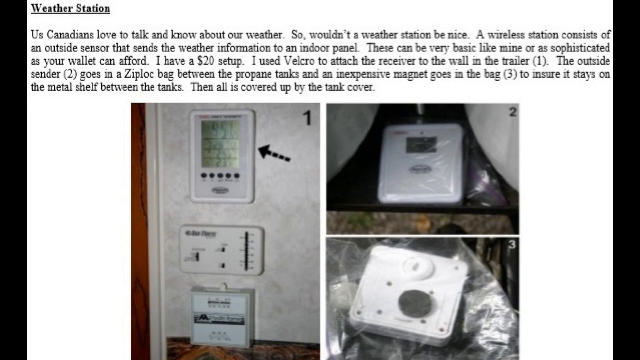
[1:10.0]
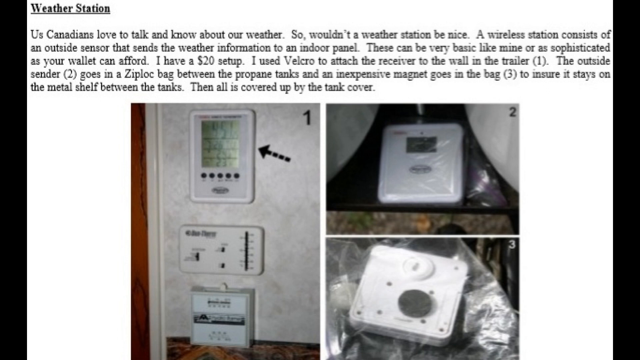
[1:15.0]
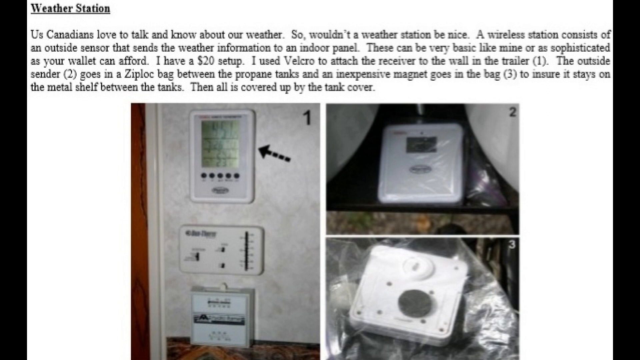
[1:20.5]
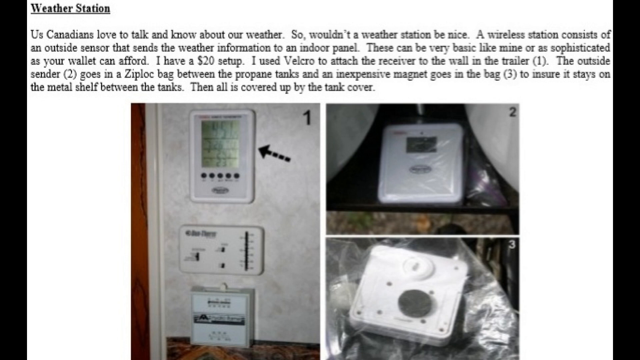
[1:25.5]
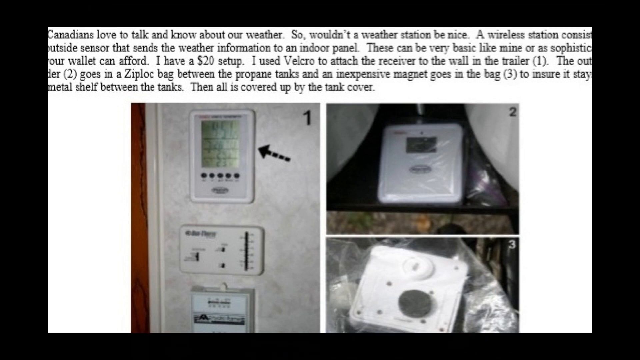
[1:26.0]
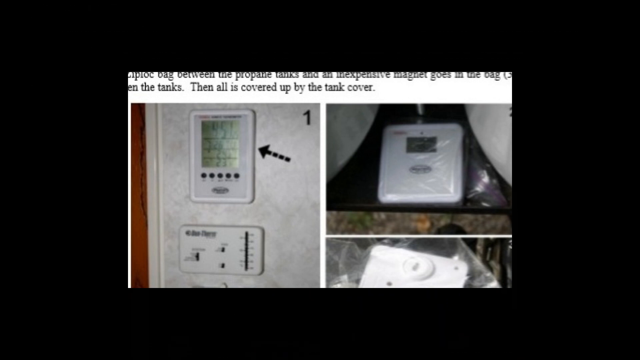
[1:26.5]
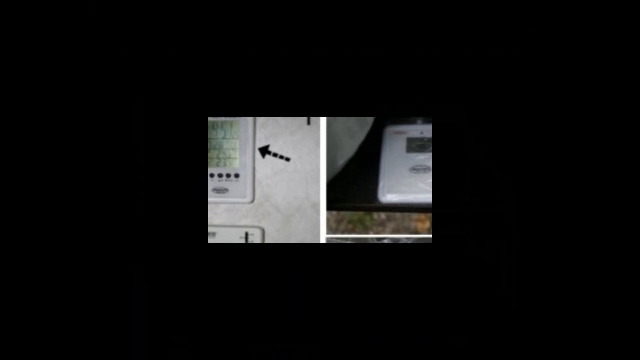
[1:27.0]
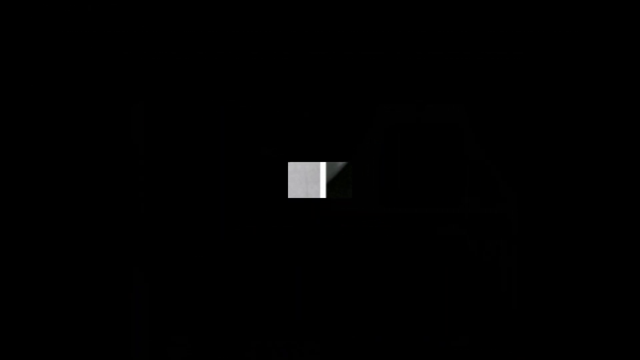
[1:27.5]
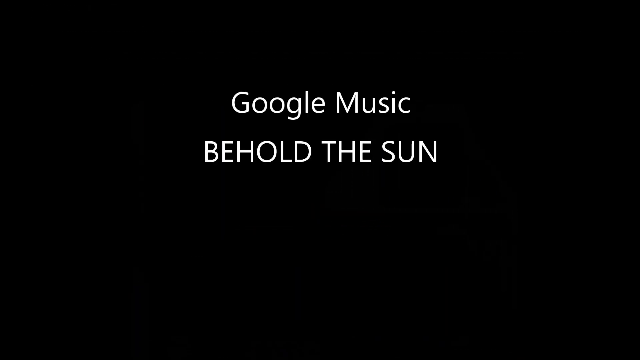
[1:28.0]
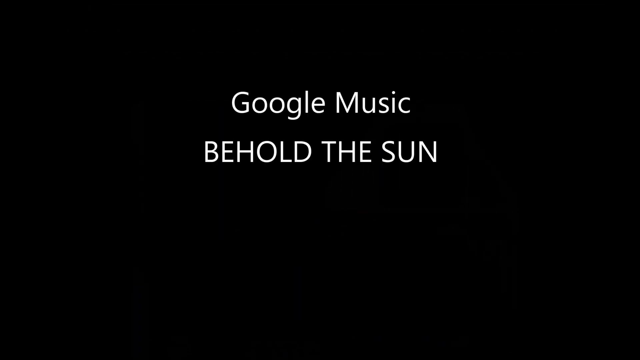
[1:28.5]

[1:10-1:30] The weather station page appears, with its text about Canadians loving to talk and know about the weather, and it shows the author's $20 setup on his wall above his thermostat. The image then changes to one reading "Google Music, behold the sun." After that it cuts right back to the weather station image, with text saying Canadians love to talk about and know what is going on with the weather, that wireless weather stations communicate between an outside sensor and an inside panel, that they can cost as little as $20 or as much as one wants to spend, and that they can be waterproof or be made weatherproof.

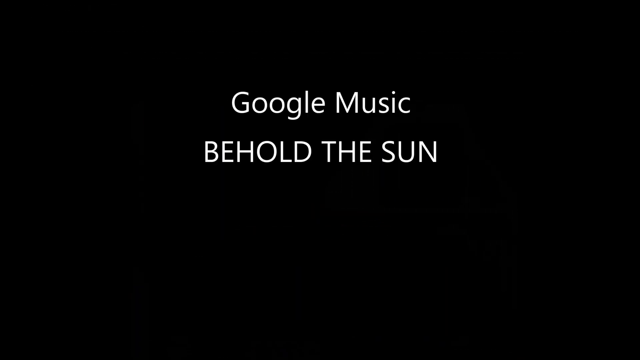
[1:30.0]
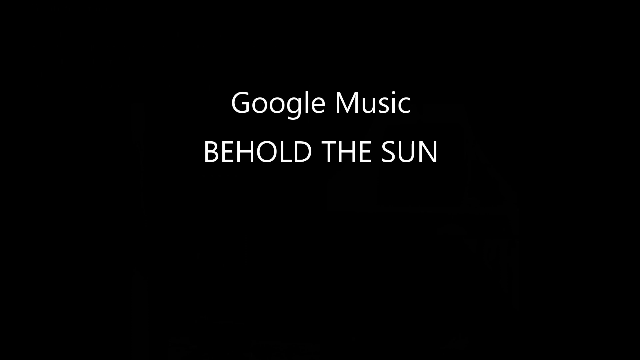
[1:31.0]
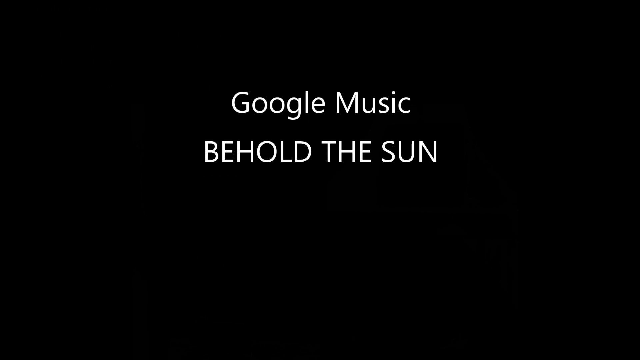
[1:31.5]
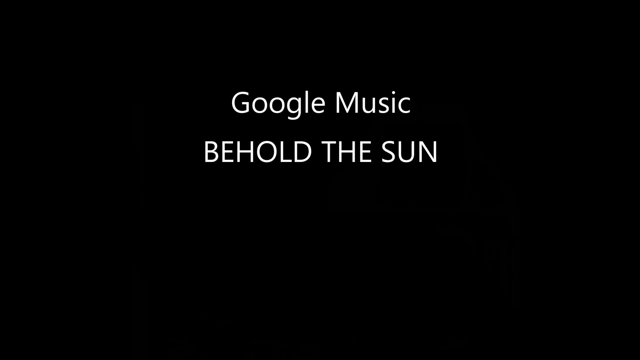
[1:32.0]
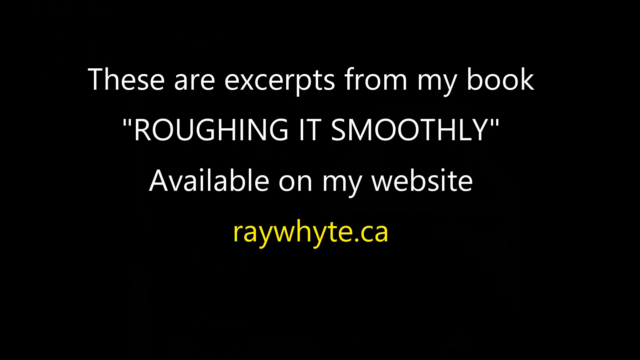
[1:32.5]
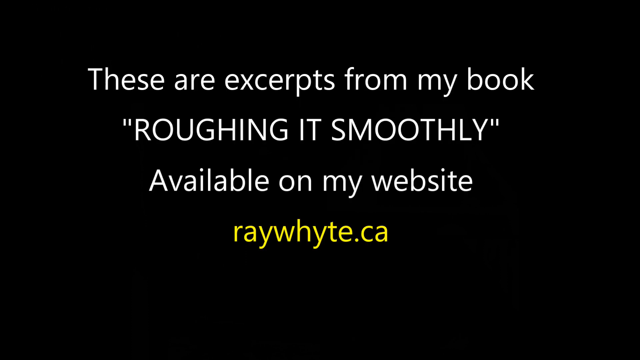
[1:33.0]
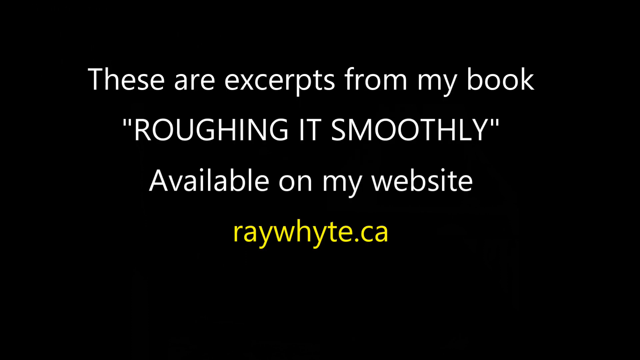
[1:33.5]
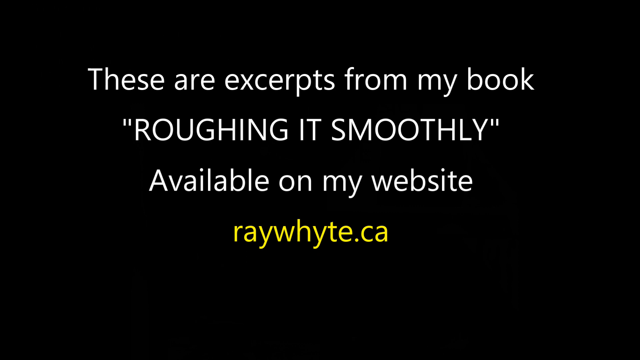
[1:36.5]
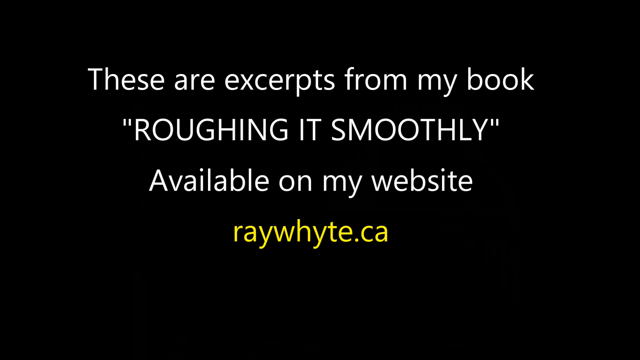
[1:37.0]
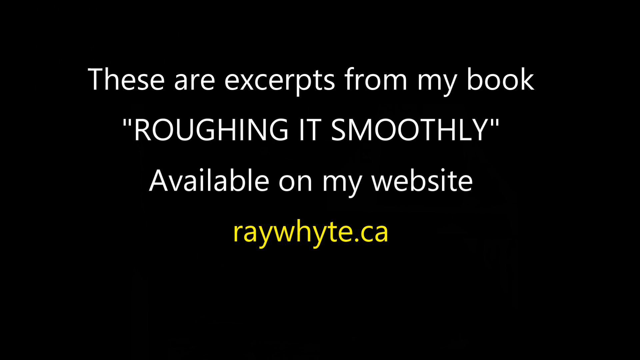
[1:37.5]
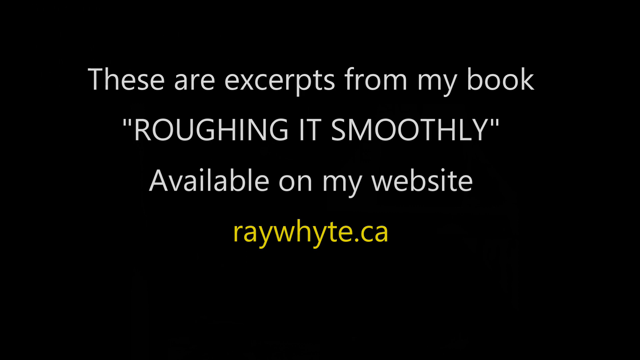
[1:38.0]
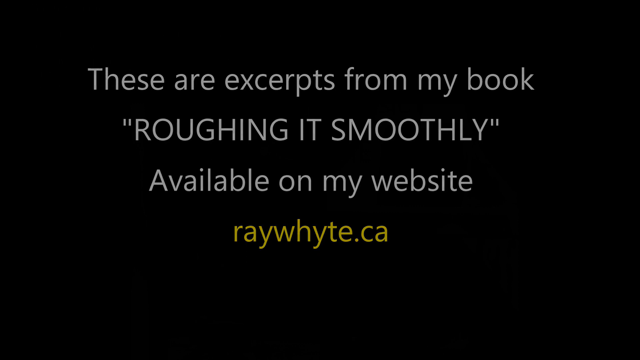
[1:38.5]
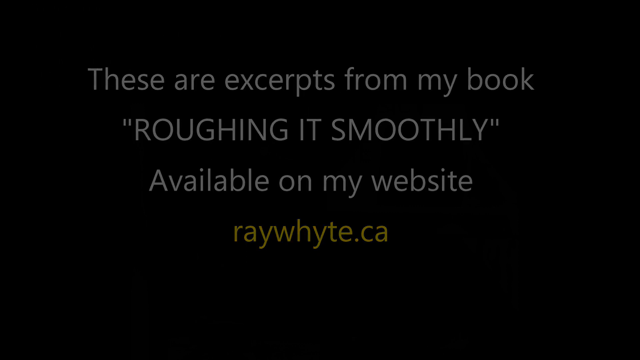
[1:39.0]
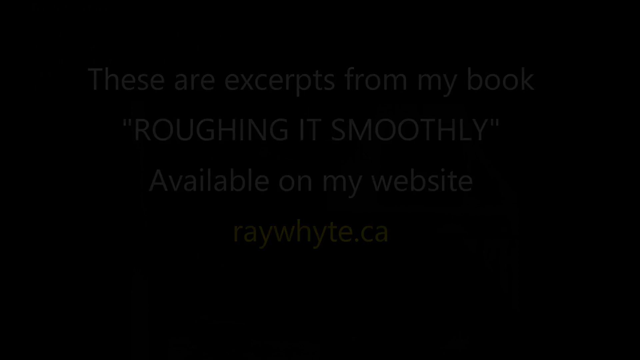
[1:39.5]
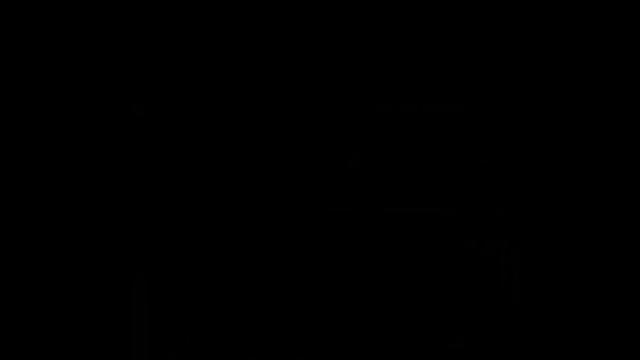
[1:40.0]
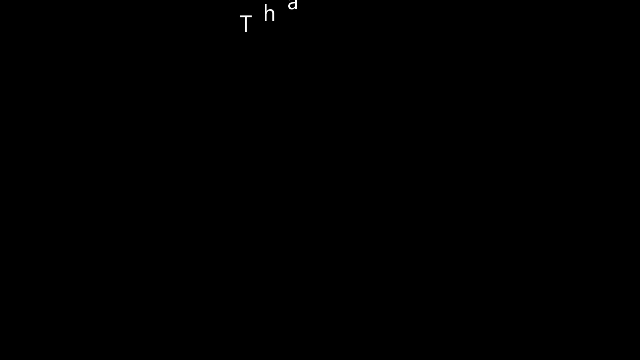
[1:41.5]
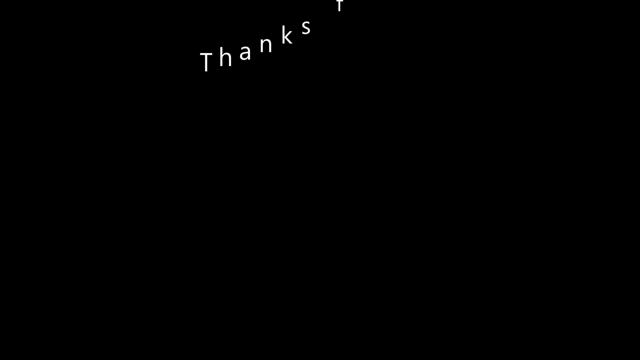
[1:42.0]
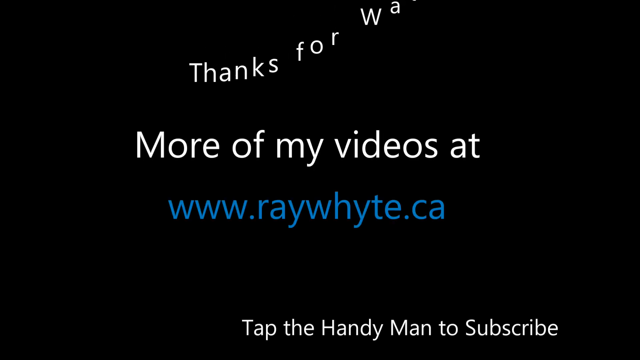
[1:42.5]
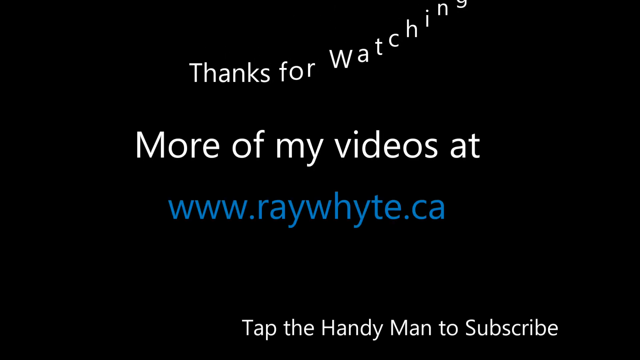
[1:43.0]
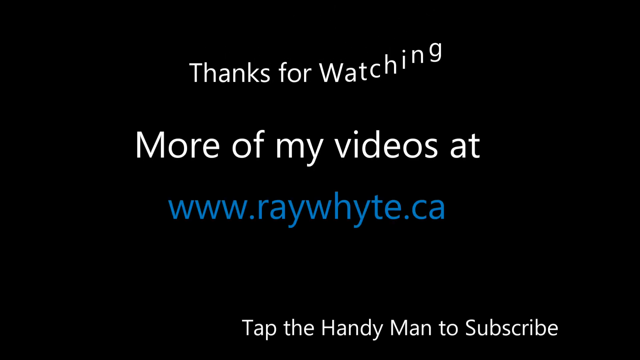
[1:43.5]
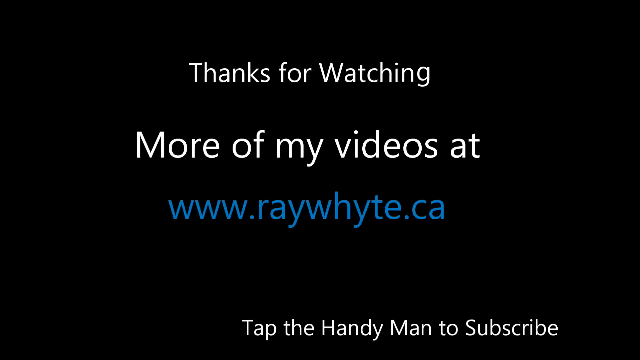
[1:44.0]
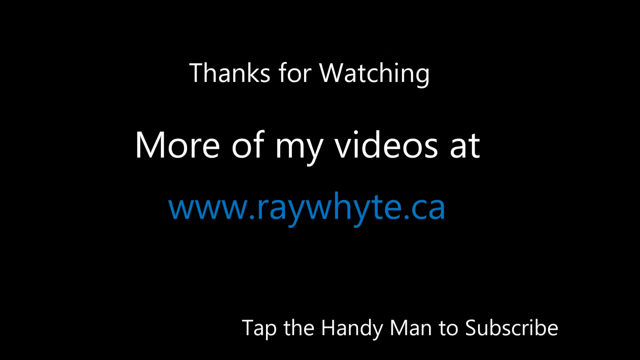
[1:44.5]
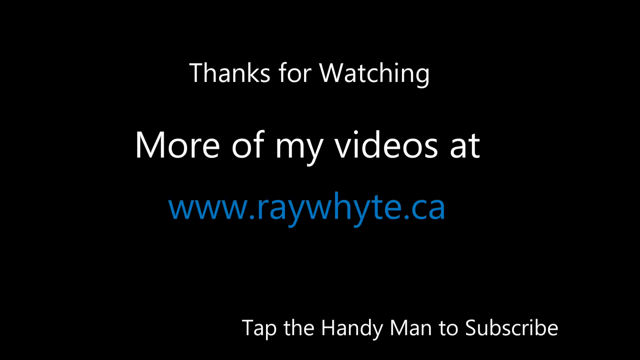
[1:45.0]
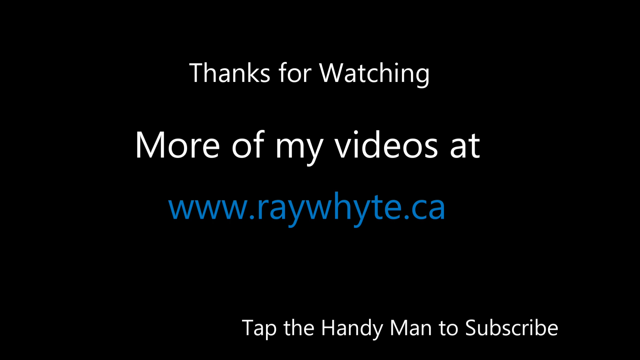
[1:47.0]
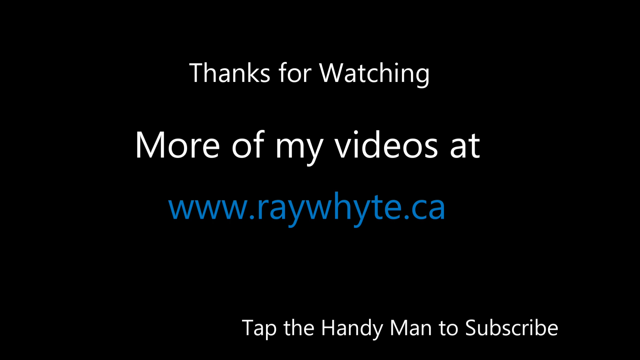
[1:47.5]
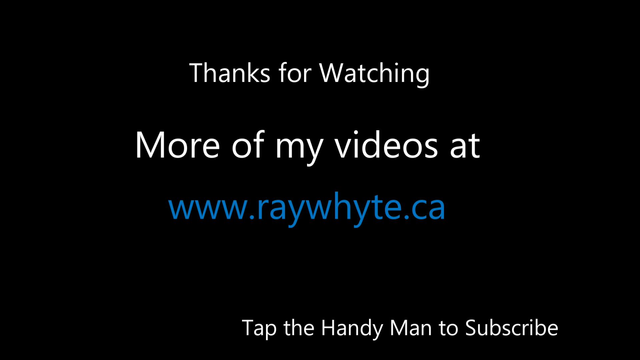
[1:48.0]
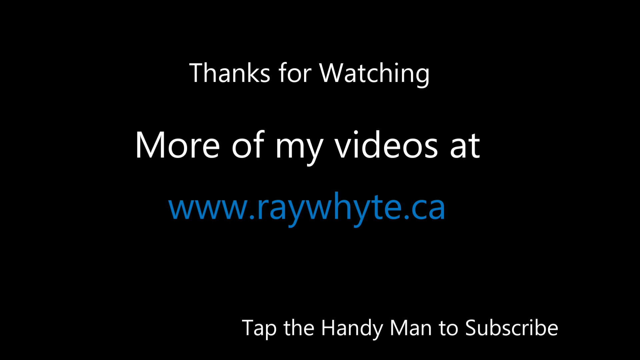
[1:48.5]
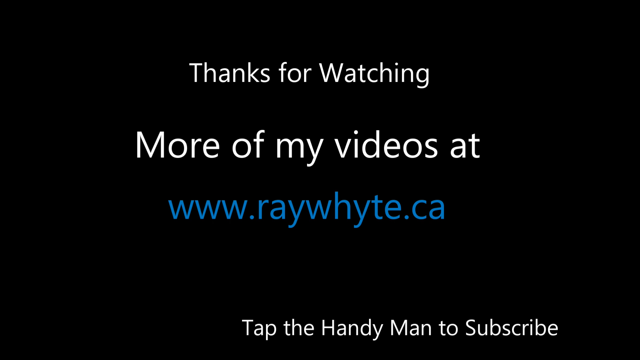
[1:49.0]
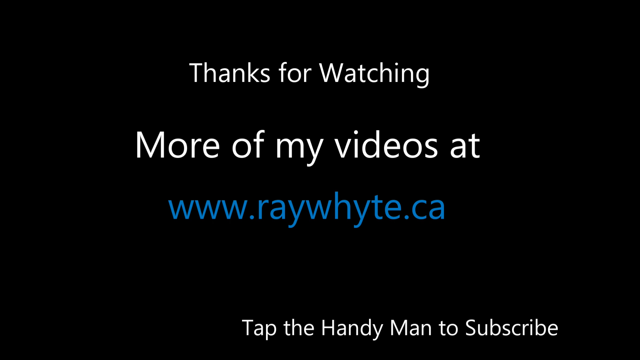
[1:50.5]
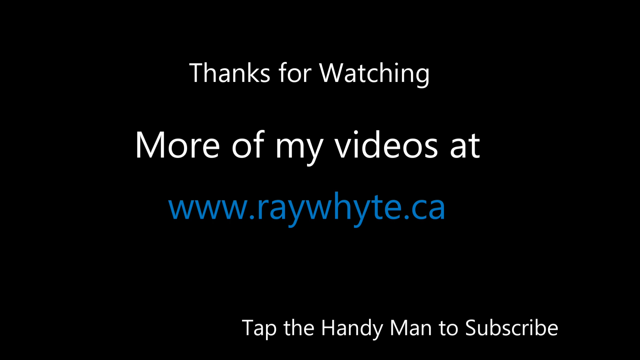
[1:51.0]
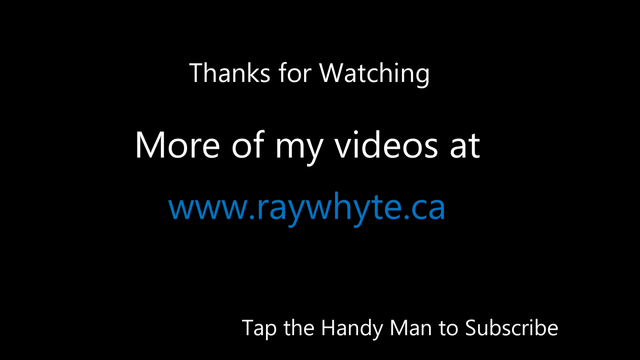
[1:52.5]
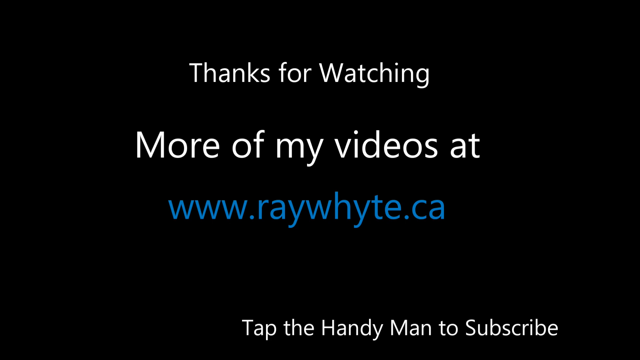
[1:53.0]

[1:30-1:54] On an all-black background, "Google Music, behold the sun" appears in the middle of the screen. Then text reads "these are excerpts from my book, Roughing It Smoothly, available on my website, raywhite.ca," and stays up for a while. Letters for the next message then come in from the top down and stack up to say "thanks for watching more of my videos at" a www.raywhite web address (given as .com or .ca) and "tap the handyman to subscribe." This message stays on screen for the last four or five seconds.